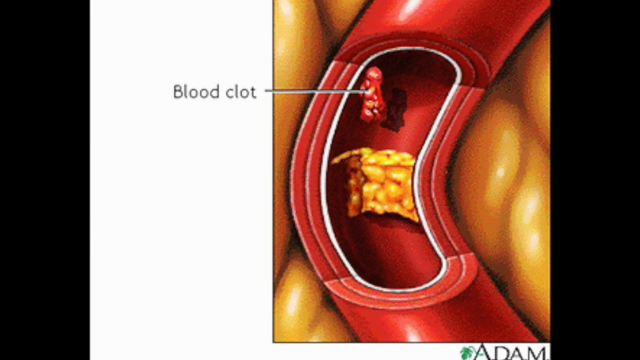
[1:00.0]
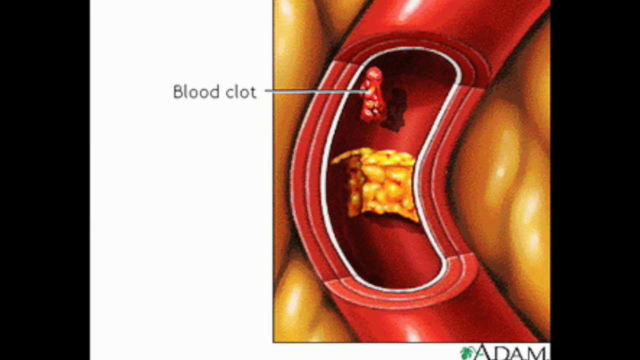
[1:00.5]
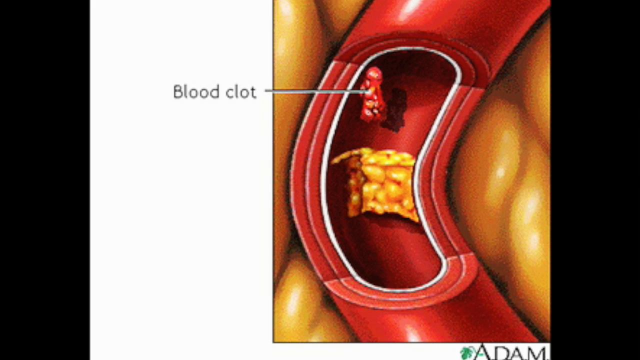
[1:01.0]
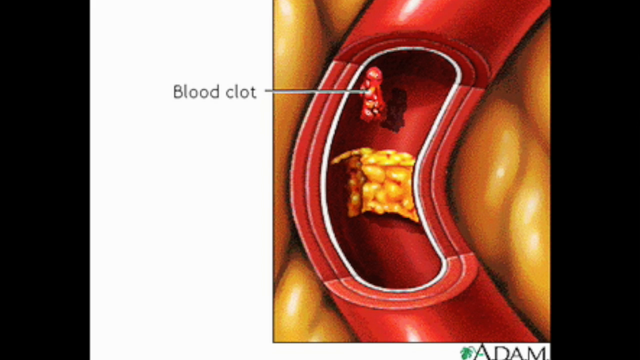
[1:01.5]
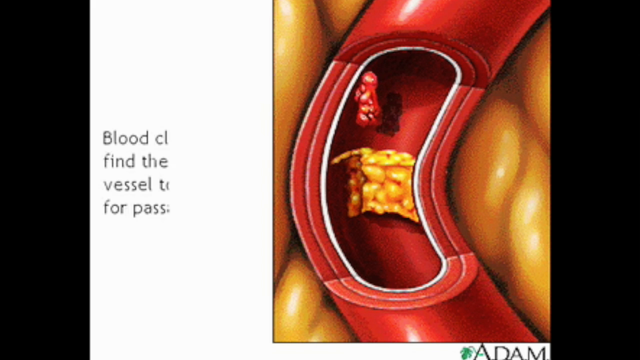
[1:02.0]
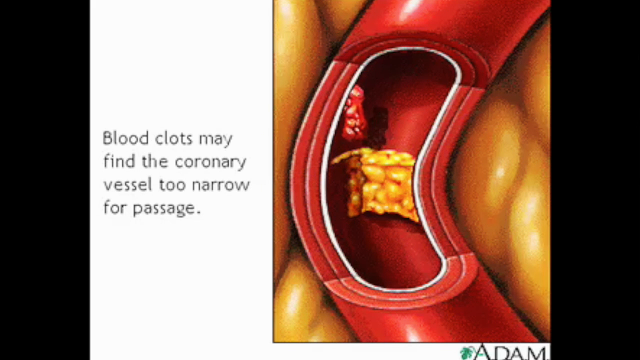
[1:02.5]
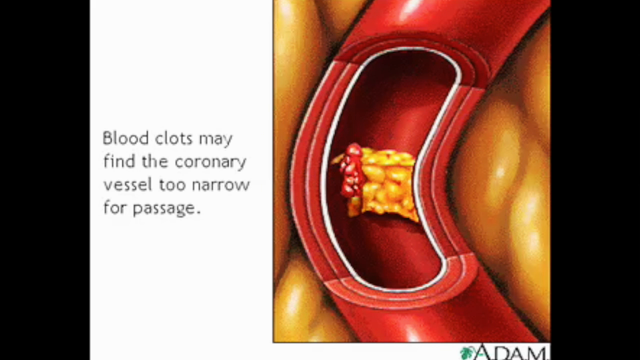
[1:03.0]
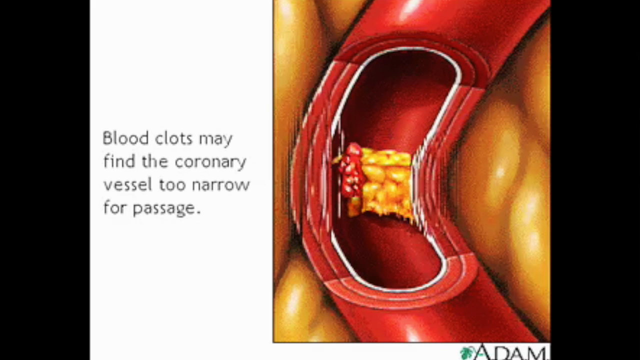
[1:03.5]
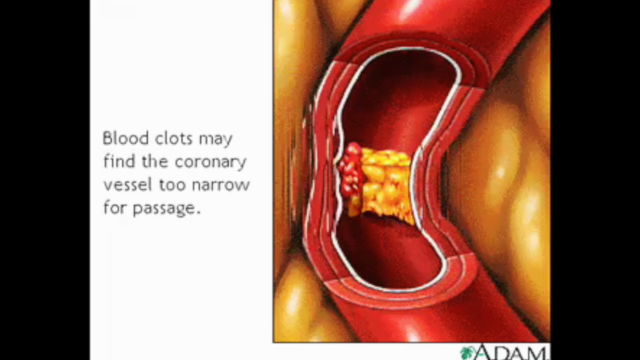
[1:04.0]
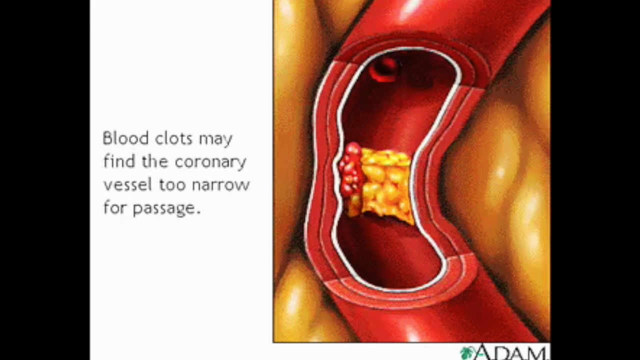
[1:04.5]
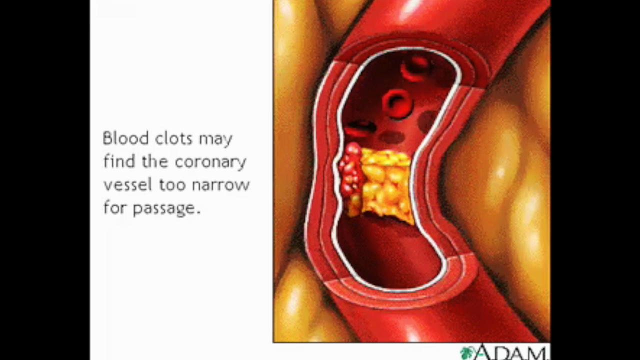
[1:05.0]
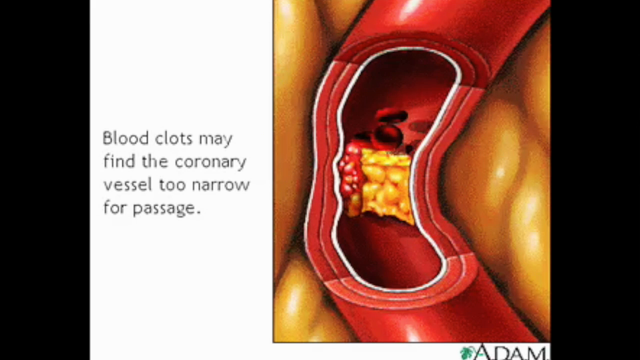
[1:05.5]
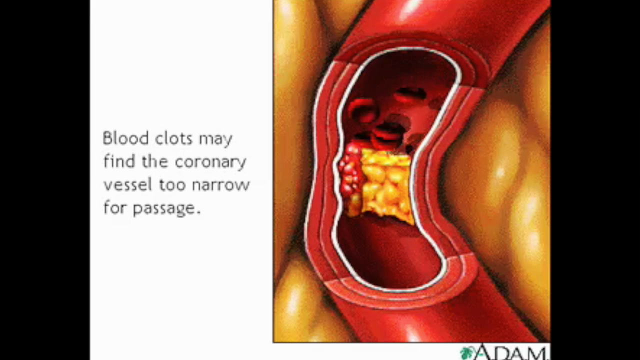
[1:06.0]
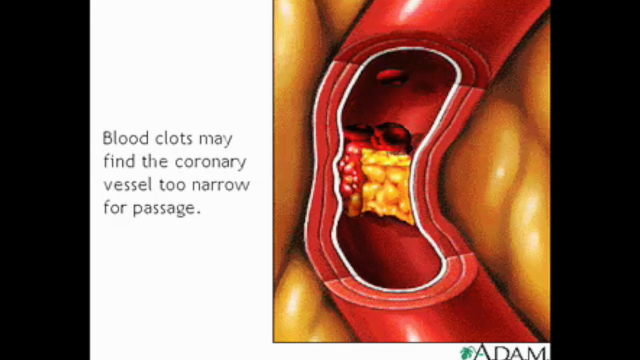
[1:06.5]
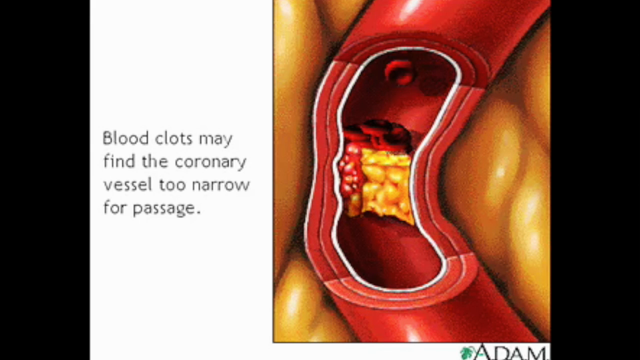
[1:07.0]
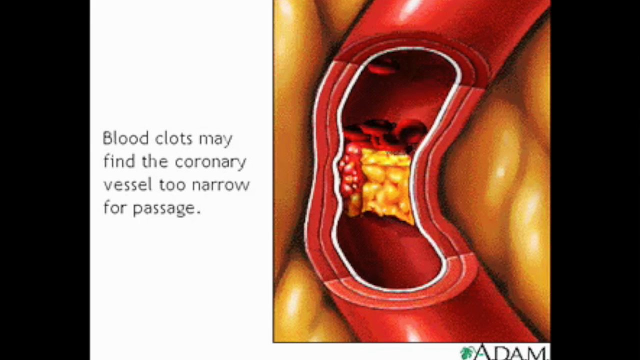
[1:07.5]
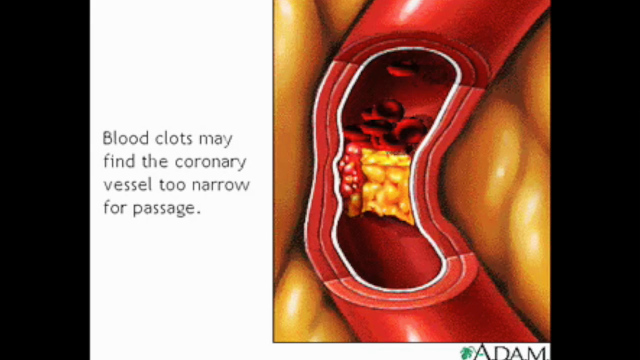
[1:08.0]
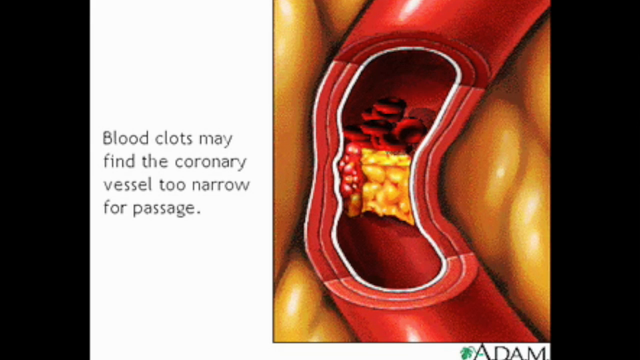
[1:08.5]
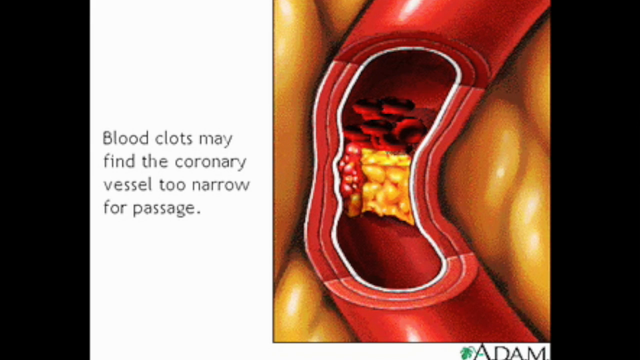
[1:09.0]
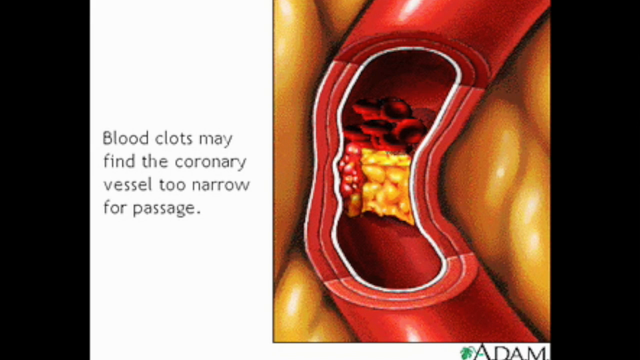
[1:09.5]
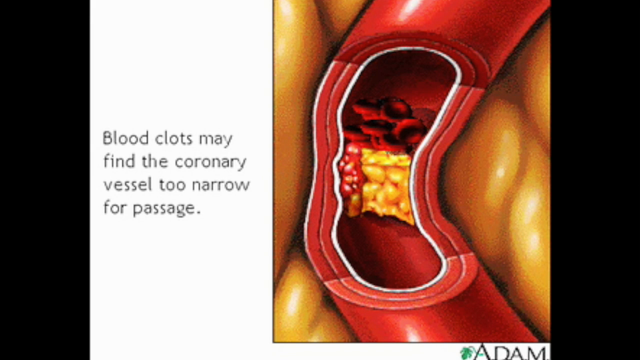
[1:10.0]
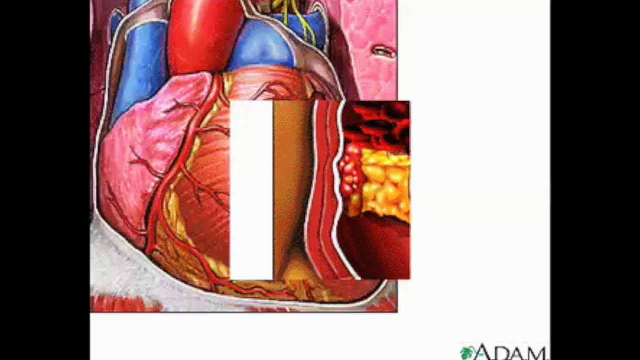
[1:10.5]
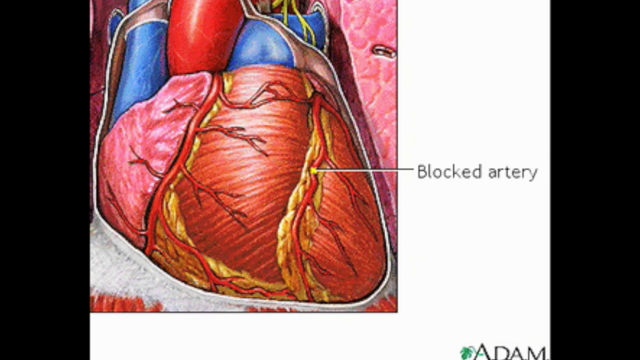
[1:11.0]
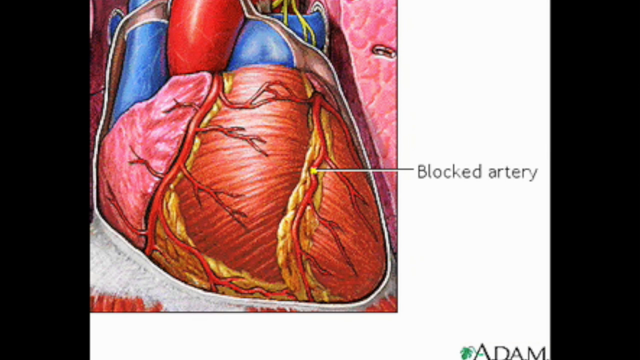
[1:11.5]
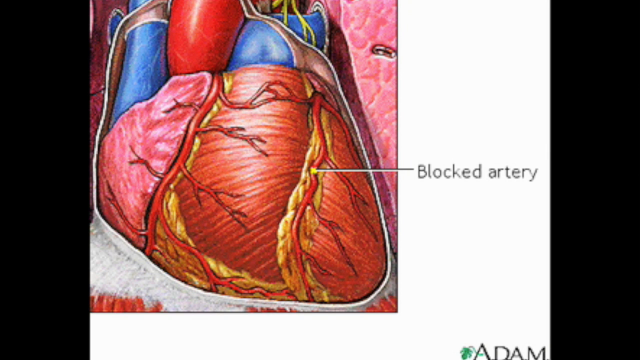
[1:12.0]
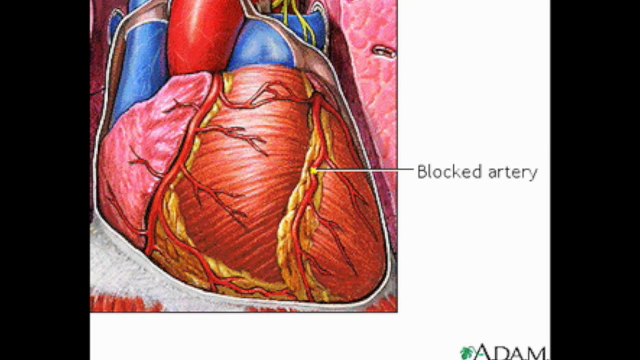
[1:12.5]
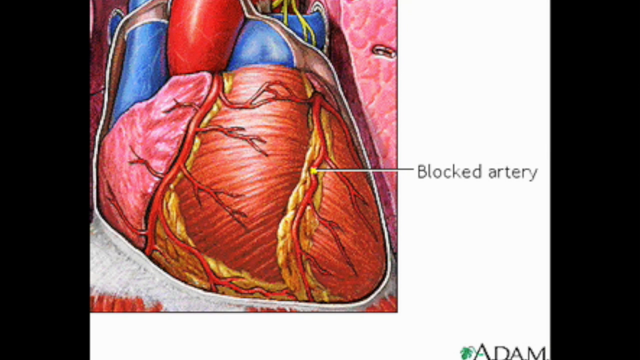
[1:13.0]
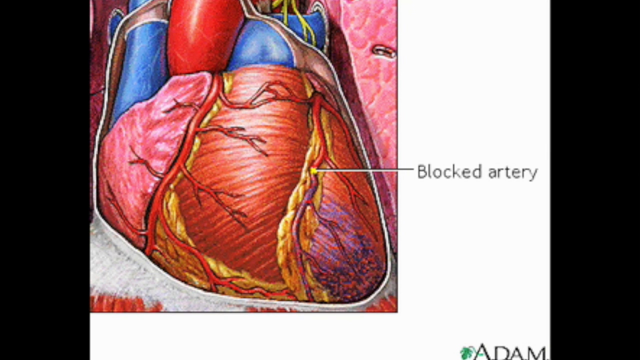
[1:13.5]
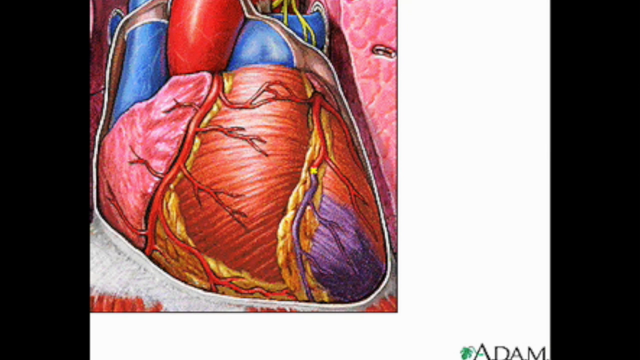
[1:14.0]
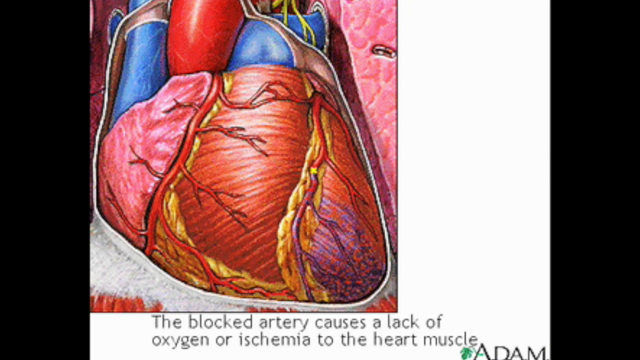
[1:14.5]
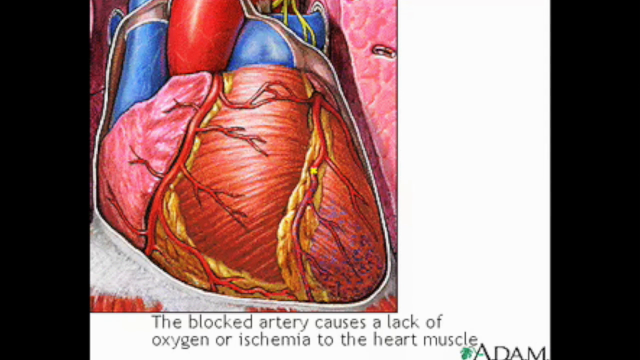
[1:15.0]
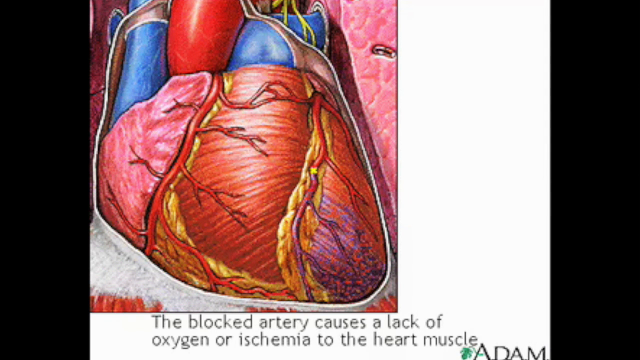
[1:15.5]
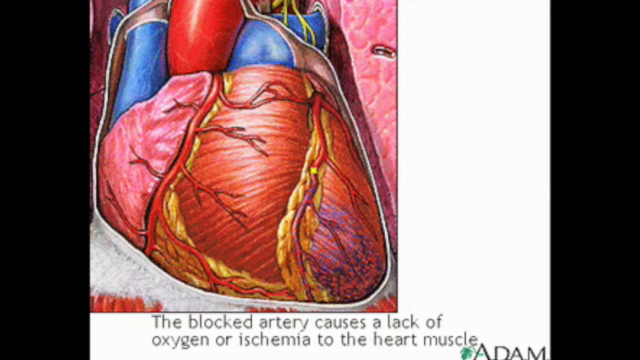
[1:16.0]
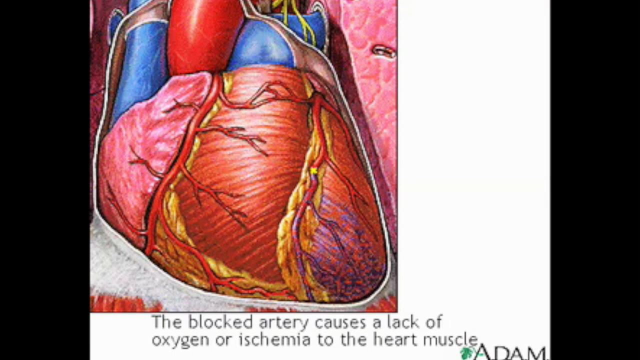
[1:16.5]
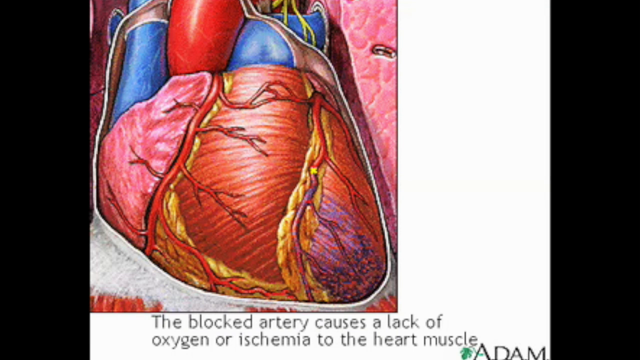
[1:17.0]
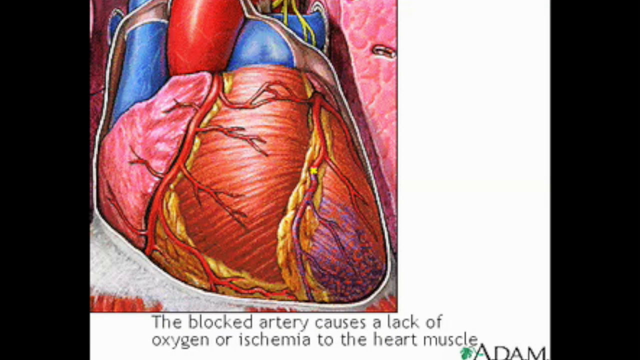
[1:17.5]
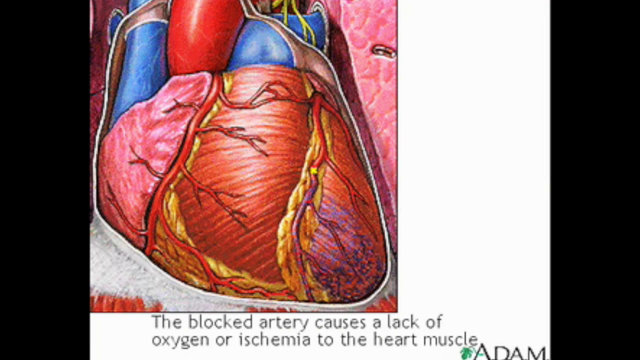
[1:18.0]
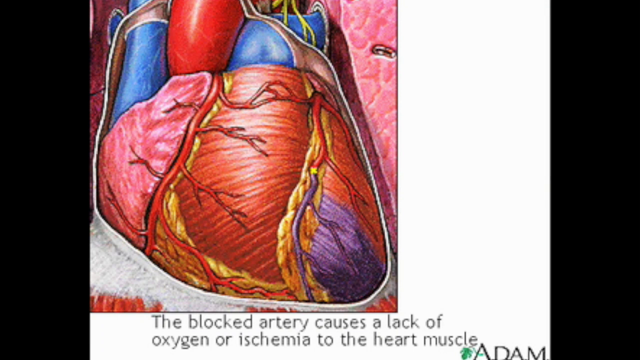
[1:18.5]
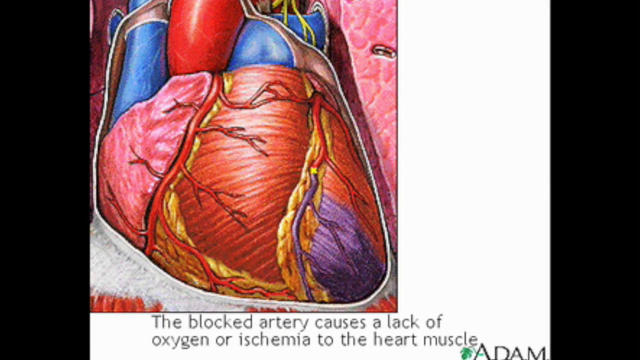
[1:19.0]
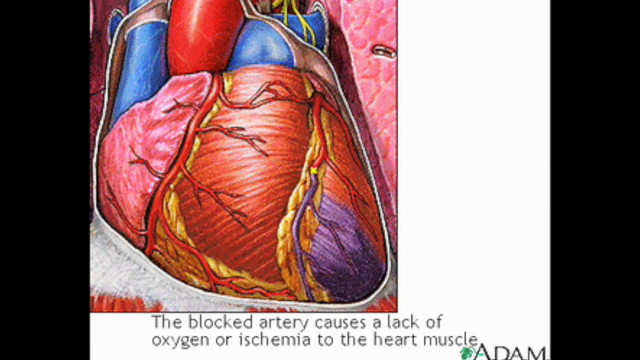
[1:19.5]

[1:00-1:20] The scene begins with the blood clot and with the plaque having closed off much of the artery. The animation shows the blood clot getting caught in the plaque buildup and completely blocking the artery, with blood piling up behind it. The background of the artery is a yellow fat substance, while the plaque buildup on the inside of the wall, which has a white circle on the very inside of the wall, is a yellow color similar to the outside. The blood clot looks like small red nodules all connected together, and the plaque causing the blockage is attached to the side of the wall, appearing to be adhered there.